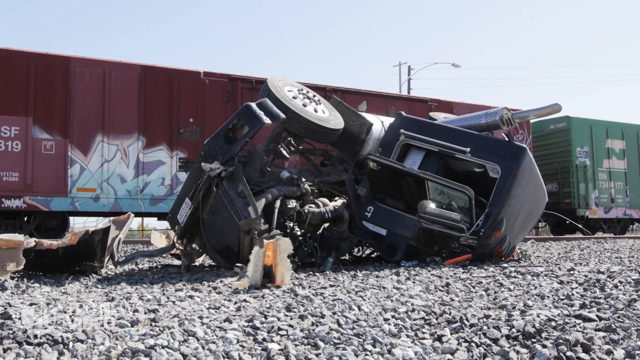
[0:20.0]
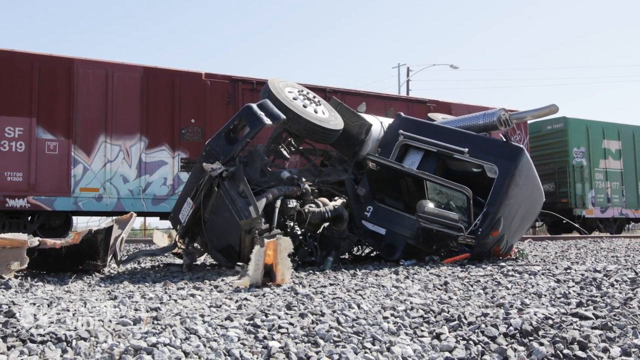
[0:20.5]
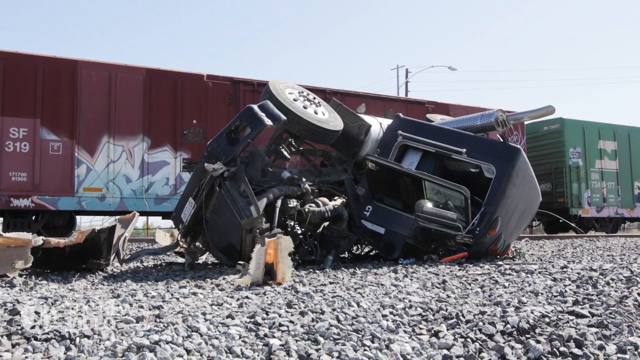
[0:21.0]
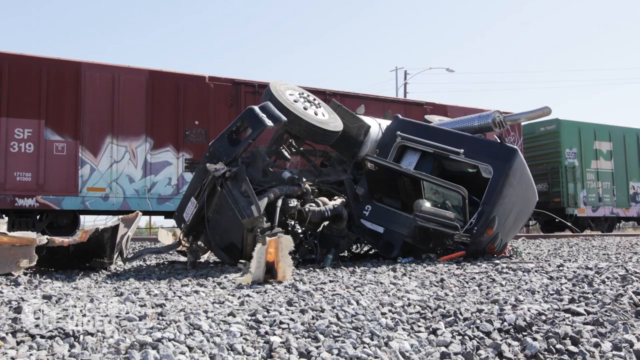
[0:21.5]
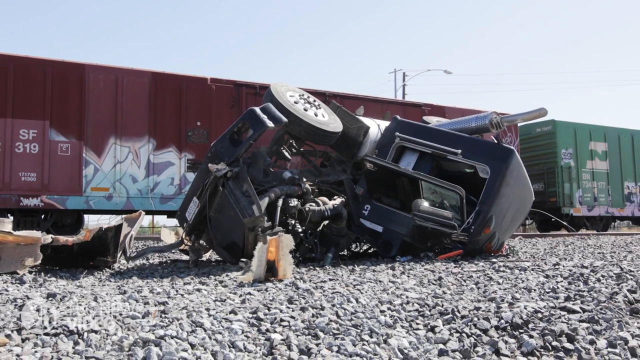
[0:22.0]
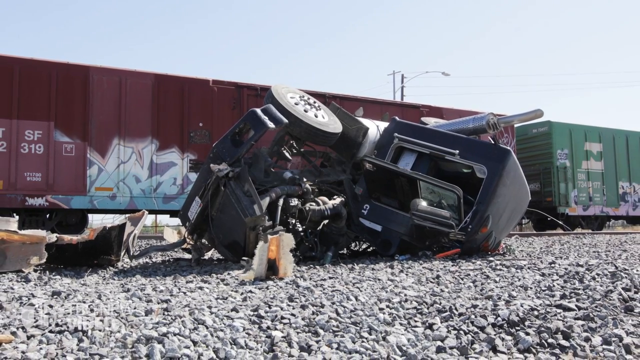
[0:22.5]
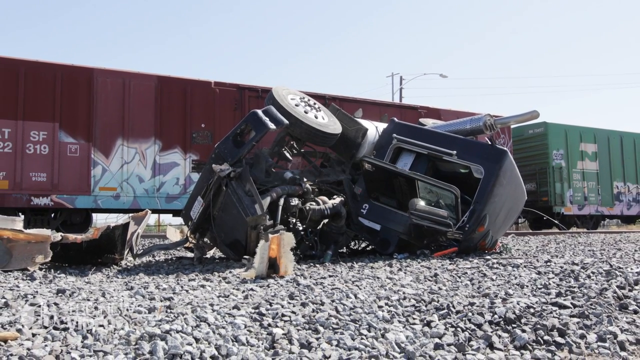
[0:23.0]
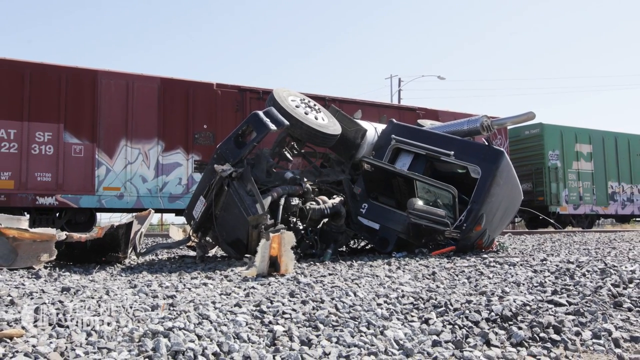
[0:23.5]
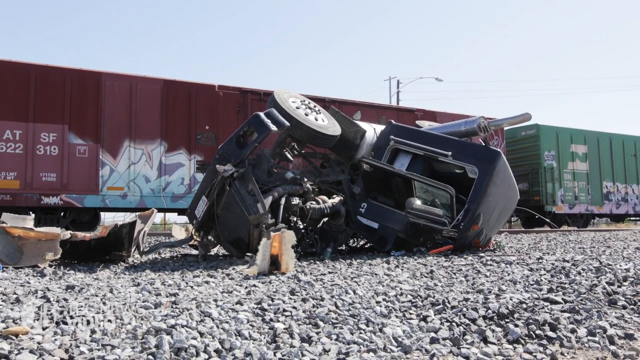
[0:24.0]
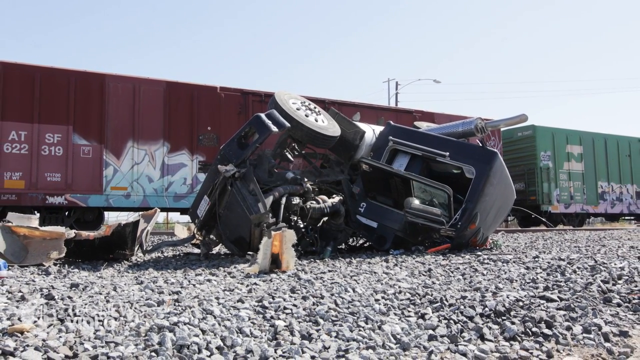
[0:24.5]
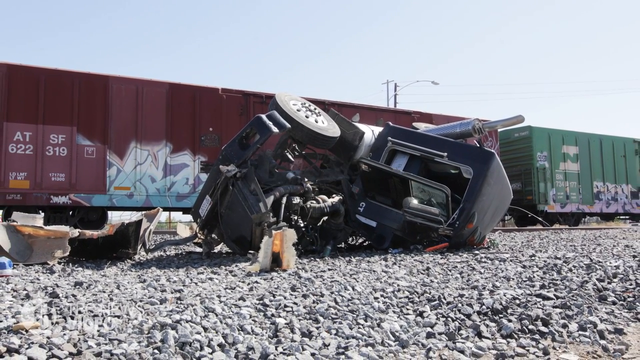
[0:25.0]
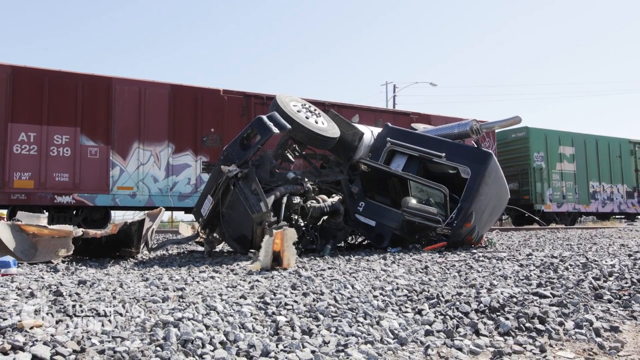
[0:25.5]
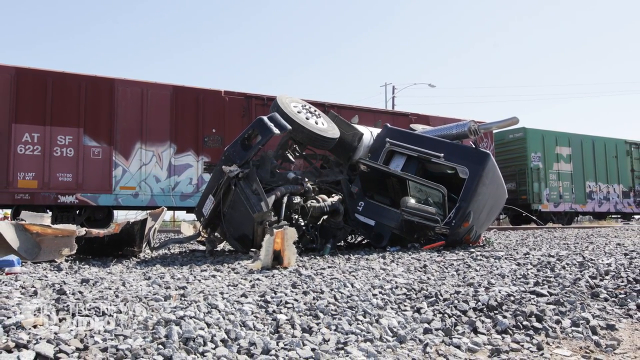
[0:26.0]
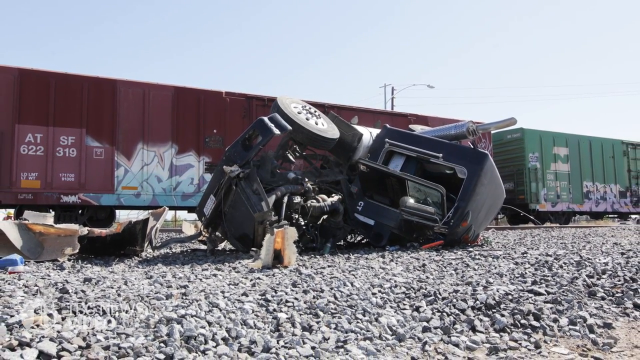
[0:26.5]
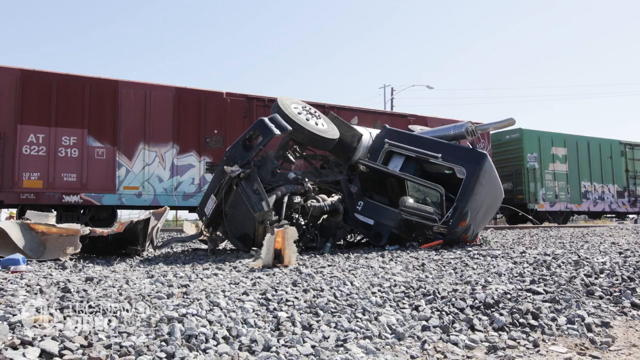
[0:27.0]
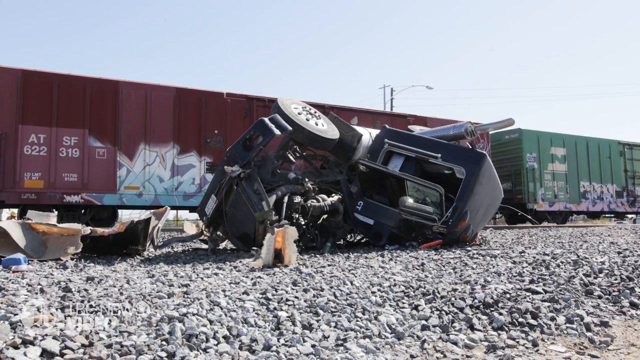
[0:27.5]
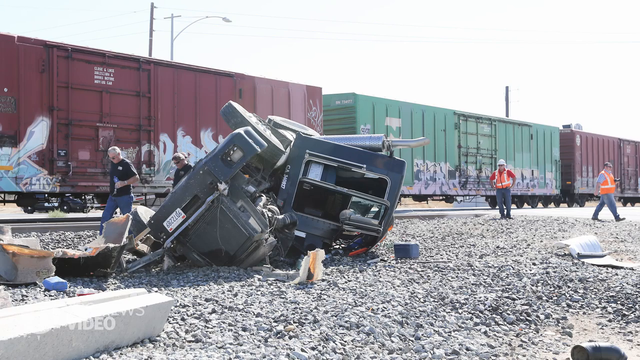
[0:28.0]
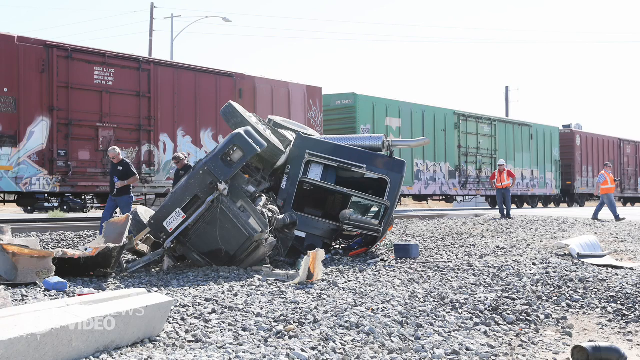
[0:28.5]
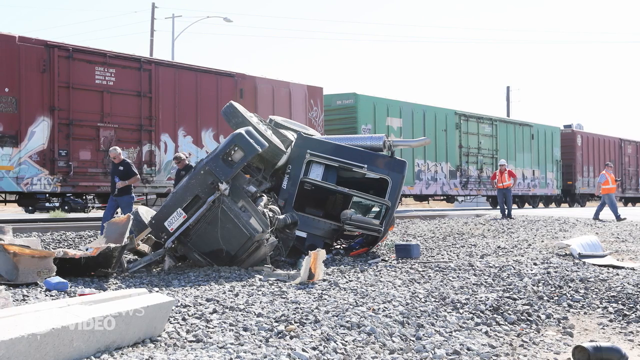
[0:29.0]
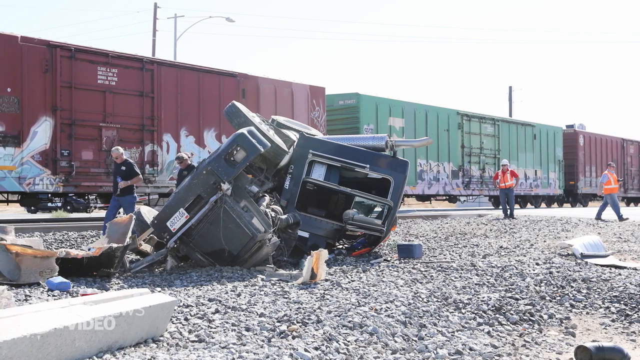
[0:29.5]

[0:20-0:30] The truck is shown upside down after an accident, apparently hit by the train. People are passing by. No one is seen lying at the side of the road and no police officers are shown in this image; it is just an image of the train and the truck it wrecked, which is upside down. The truck's driver is nowhere to be seen.